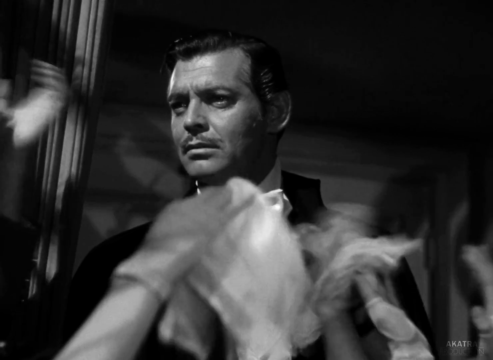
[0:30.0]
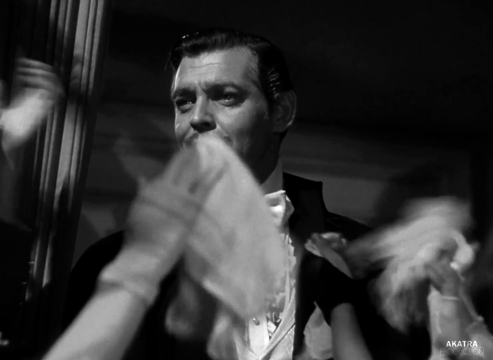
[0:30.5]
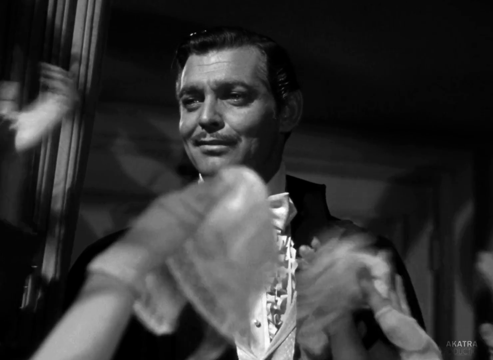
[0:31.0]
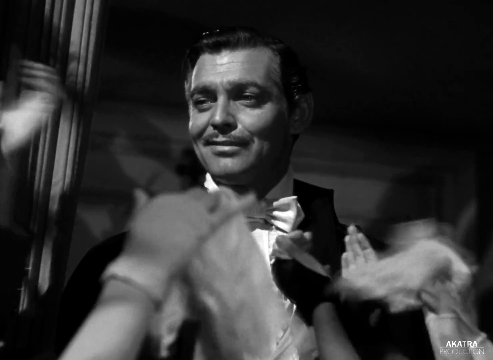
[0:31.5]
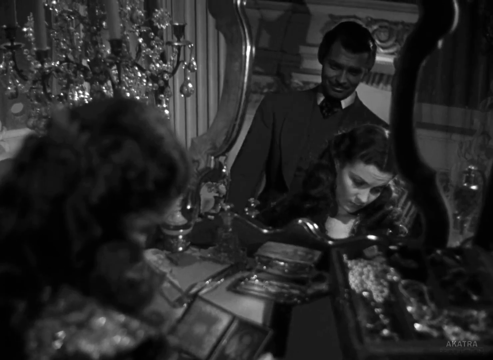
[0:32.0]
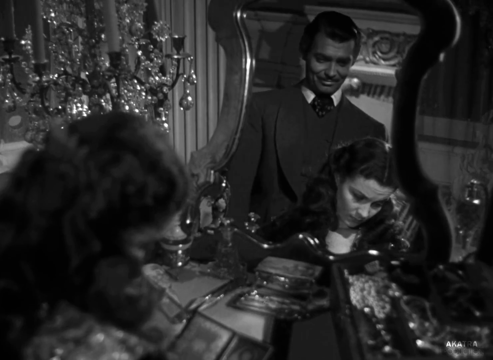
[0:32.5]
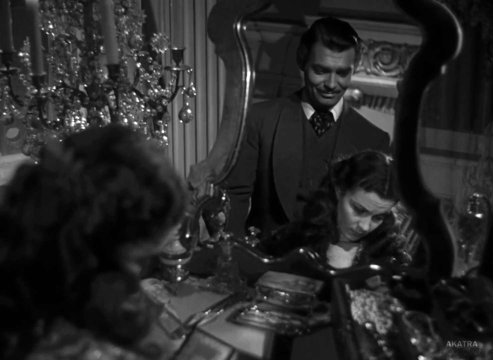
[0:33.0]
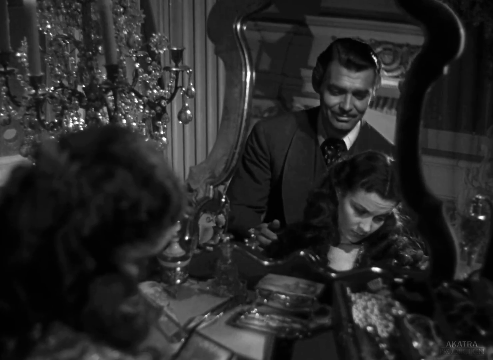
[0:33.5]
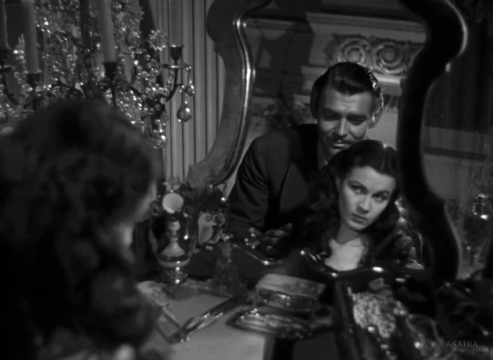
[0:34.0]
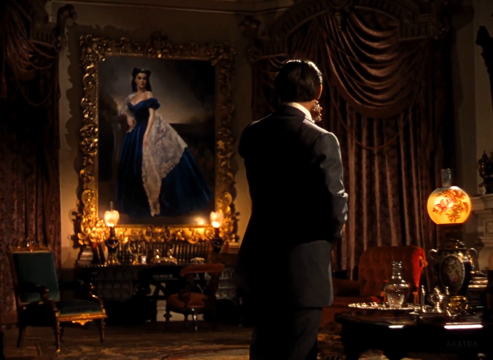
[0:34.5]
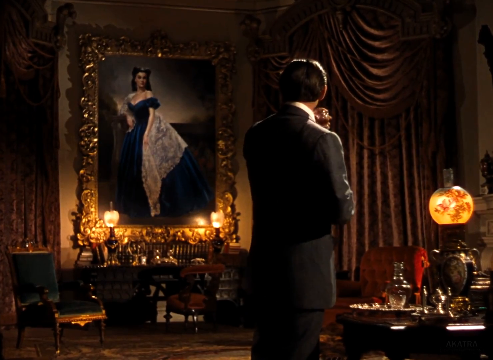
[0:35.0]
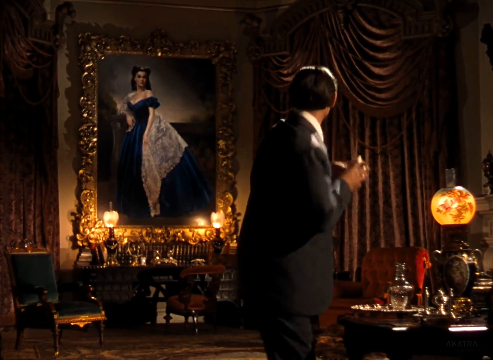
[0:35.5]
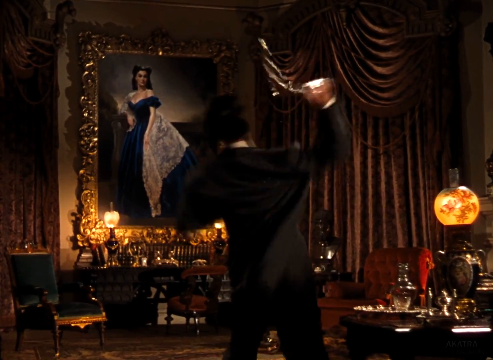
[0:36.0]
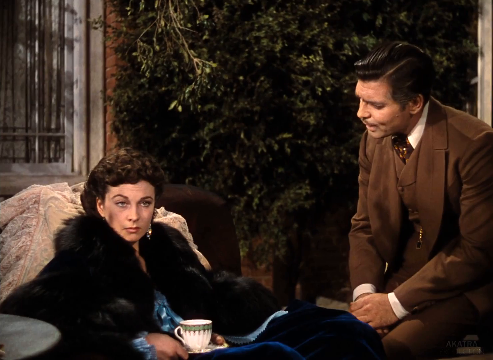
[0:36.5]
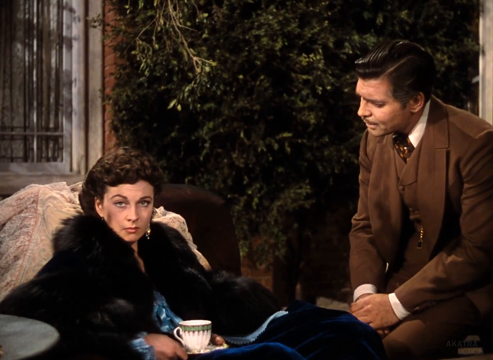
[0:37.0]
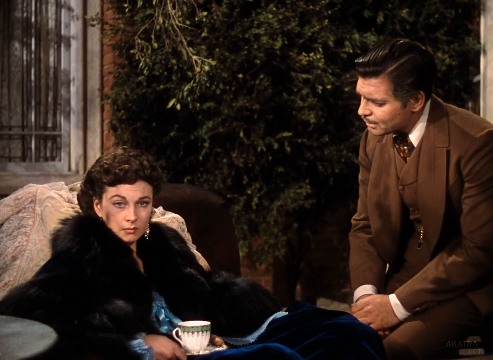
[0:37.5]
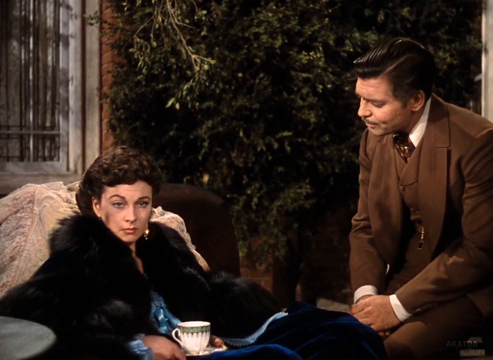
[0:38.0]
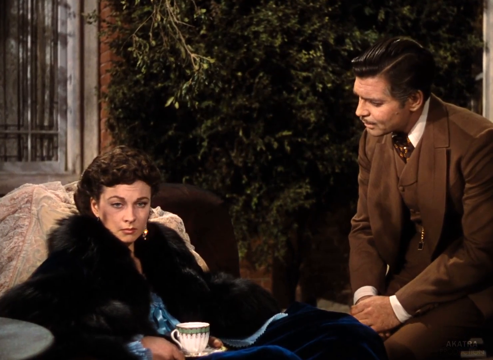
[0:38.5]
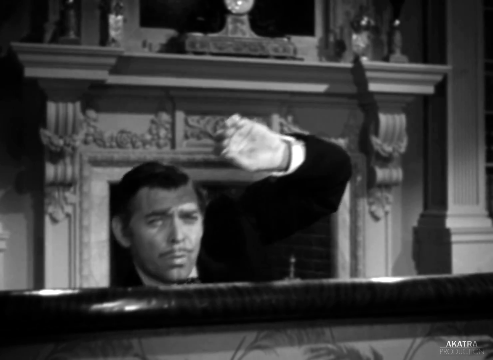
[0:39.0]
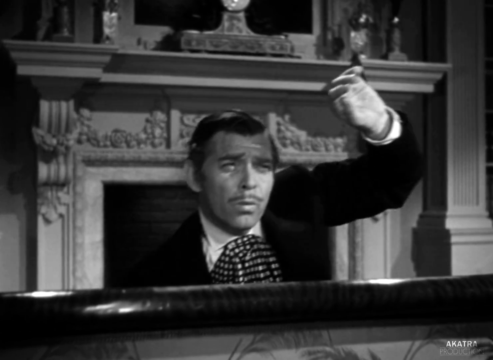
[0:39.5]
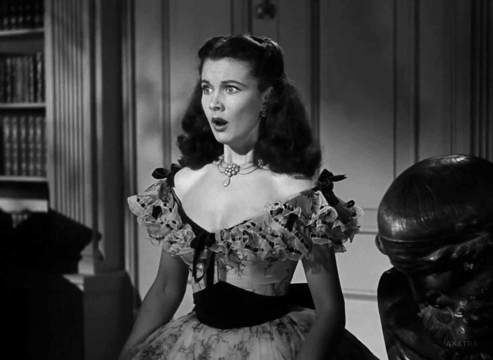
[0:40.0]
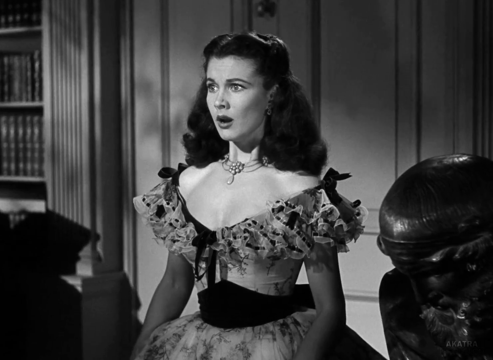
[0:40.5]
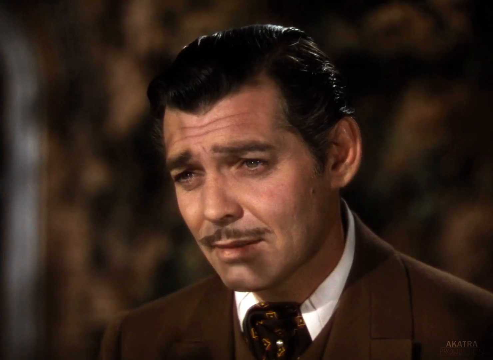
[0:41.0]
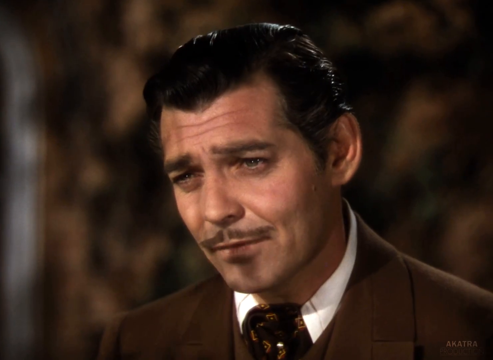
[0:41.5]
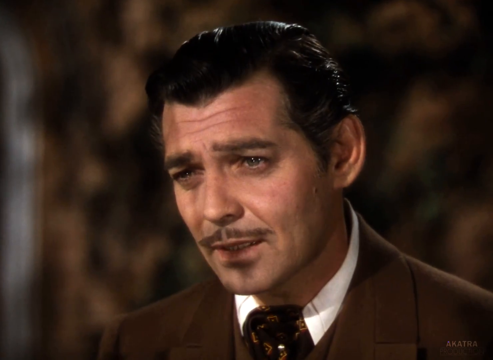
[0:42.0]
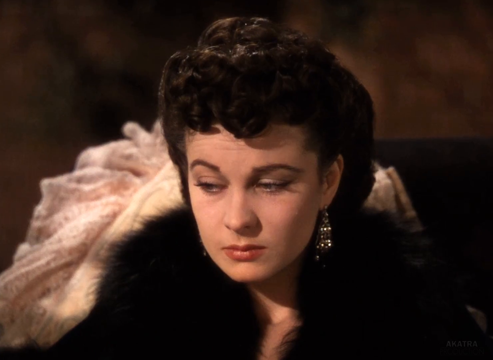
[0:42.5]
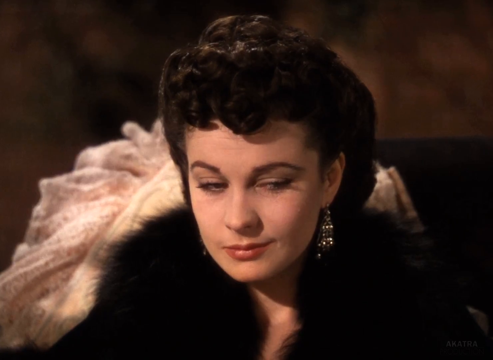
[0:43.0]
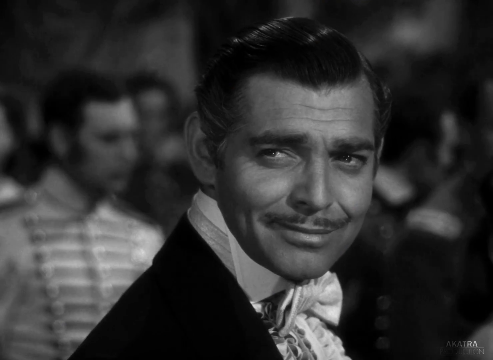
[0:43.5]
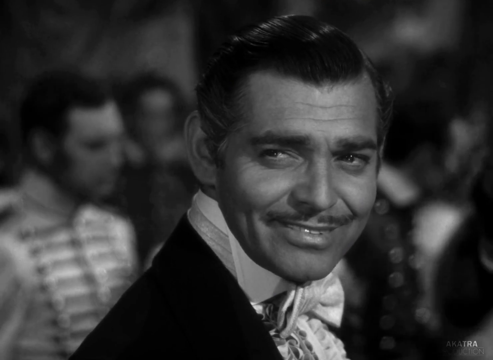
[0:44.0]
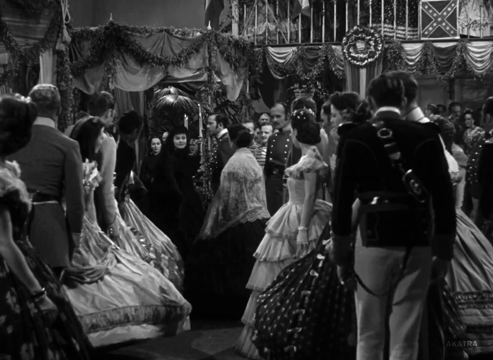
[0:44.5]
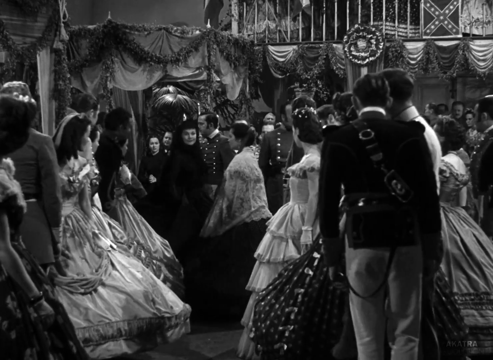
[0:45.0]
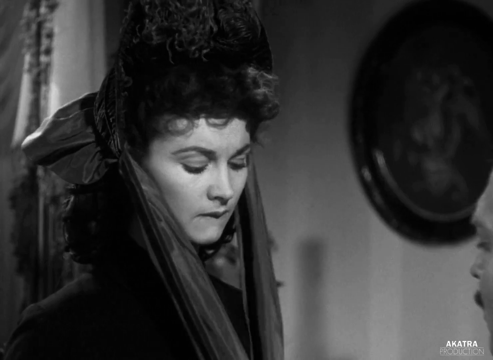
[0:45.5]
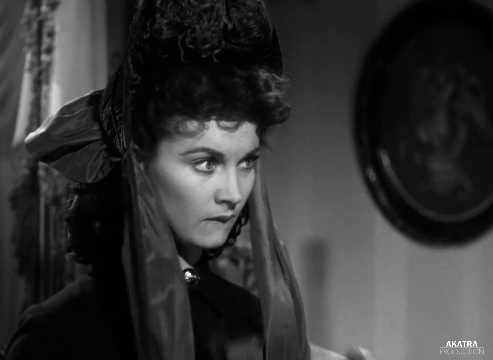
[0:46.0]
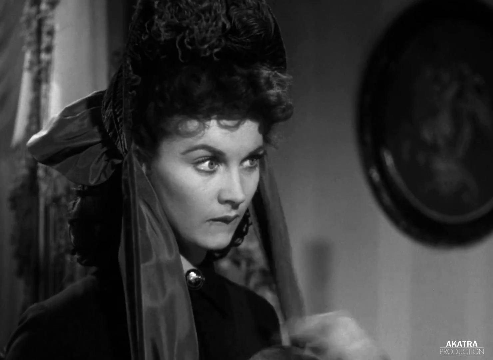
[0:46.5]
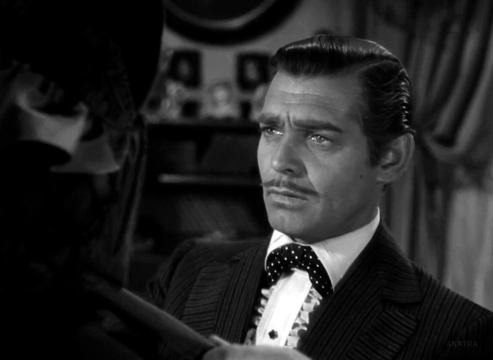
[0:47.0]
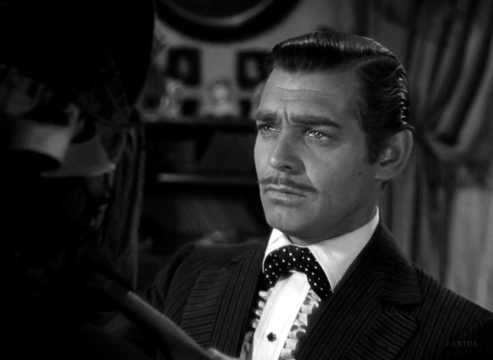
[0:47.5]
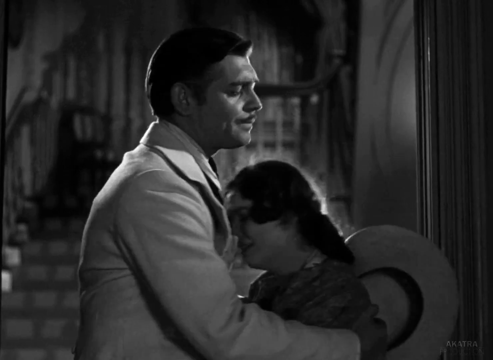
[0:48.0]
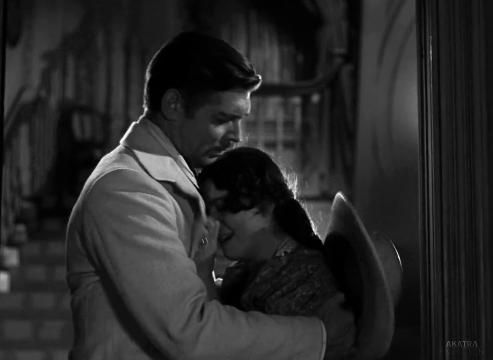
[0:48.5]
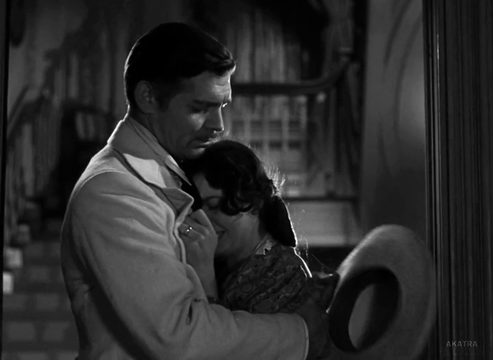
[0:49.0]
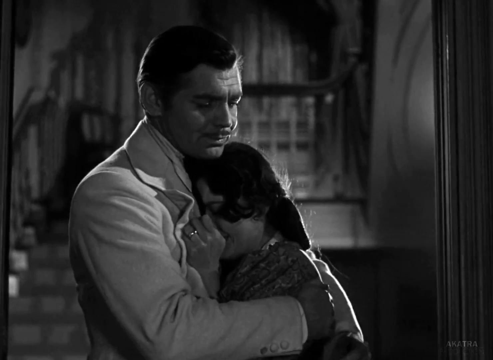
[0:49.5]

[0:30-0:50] The footage switches to black and white, first showing a walk up, or a view up, some stairs. Some parts are in black and white and others are in color. The man stands in front of a crowd whose members wave napkins or something similar in front of them, over and over. He then comes up behind the lady from the bed and hugs her as she fixes herself up in the mirror. Next, the man looks at a painting of someone and throws a glass at it. Later he crouches behind a table and peeks out. Several scenes follow of what appears to be the same couple, though it is unclear whether they are a couple or in a more distant relationship.